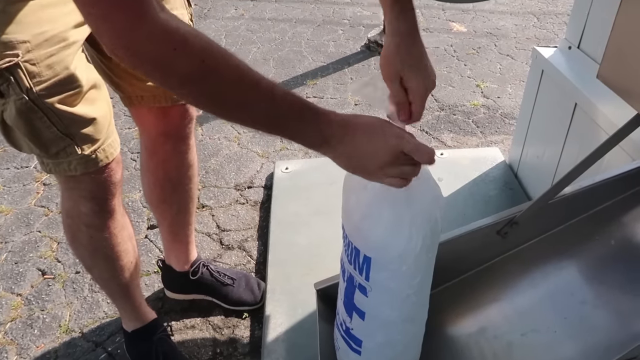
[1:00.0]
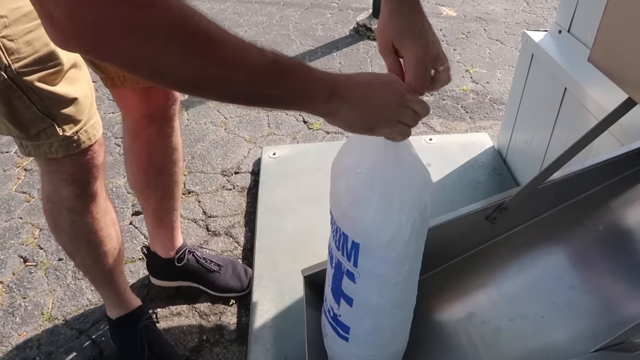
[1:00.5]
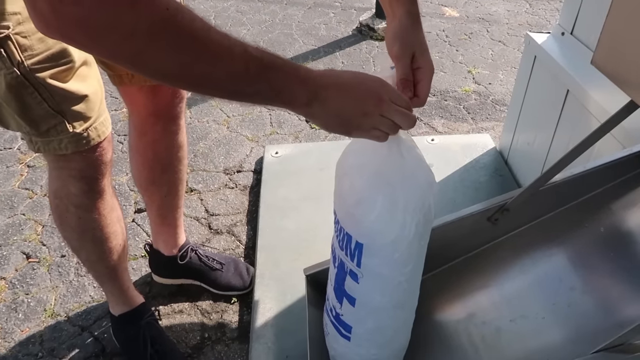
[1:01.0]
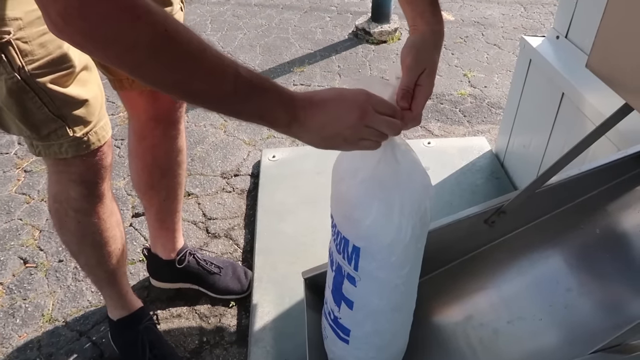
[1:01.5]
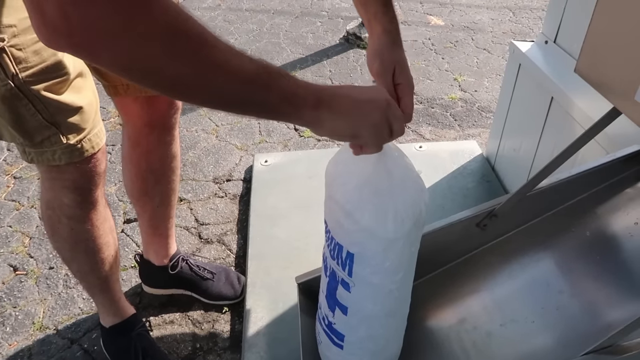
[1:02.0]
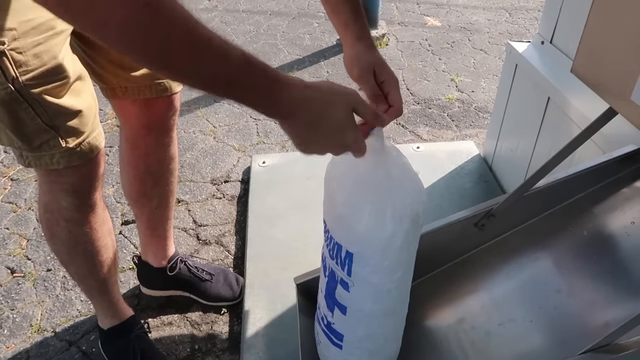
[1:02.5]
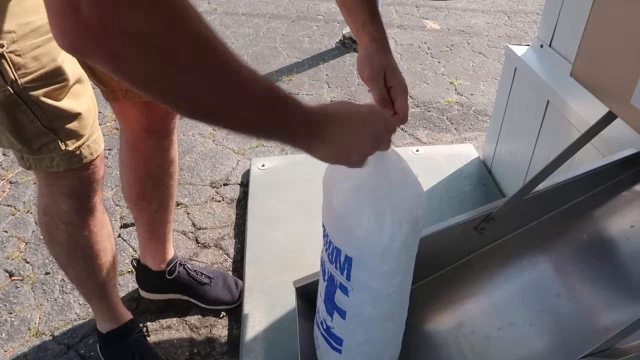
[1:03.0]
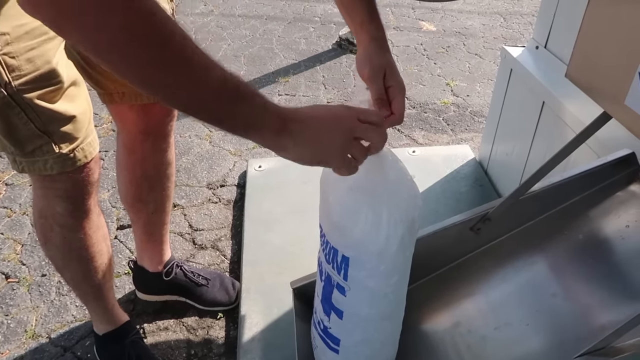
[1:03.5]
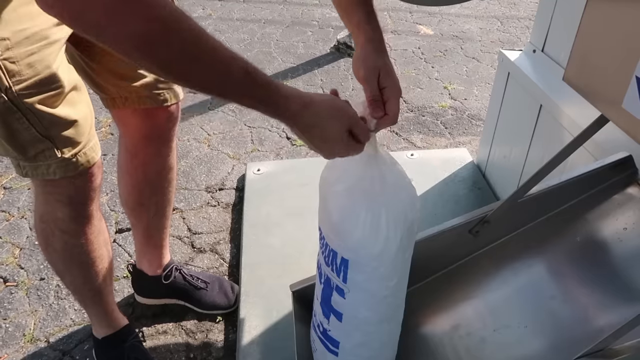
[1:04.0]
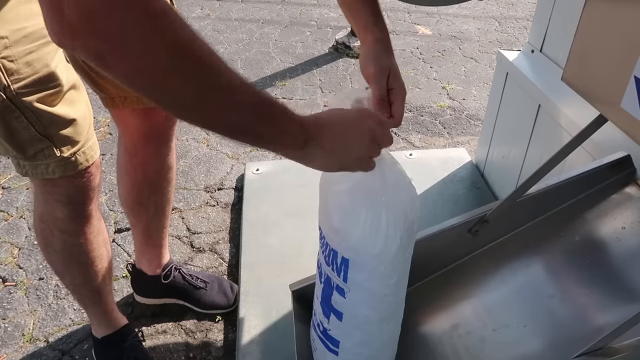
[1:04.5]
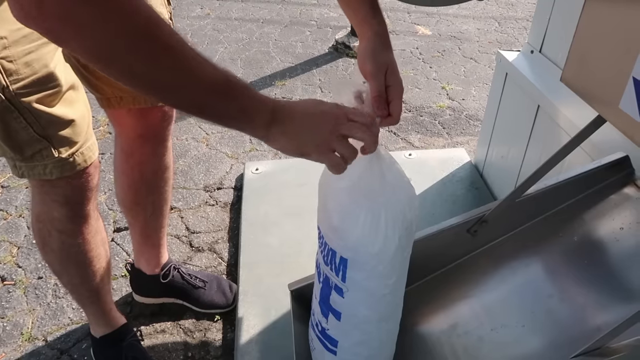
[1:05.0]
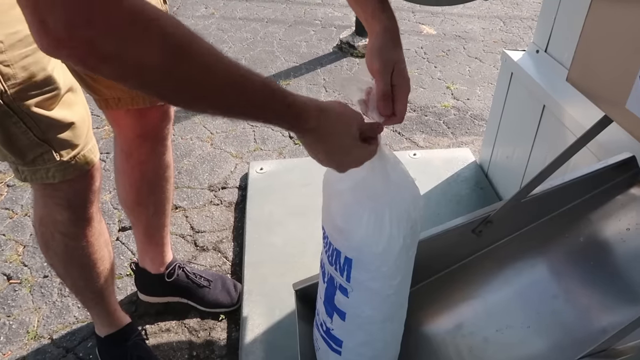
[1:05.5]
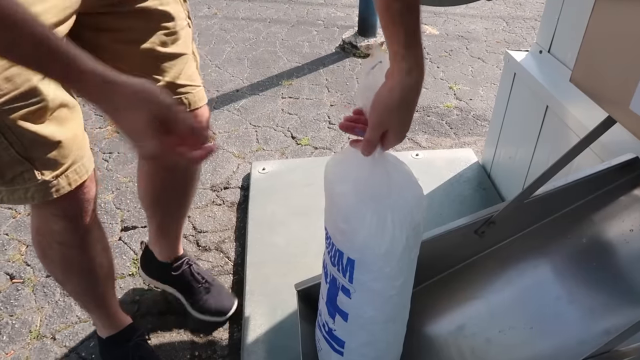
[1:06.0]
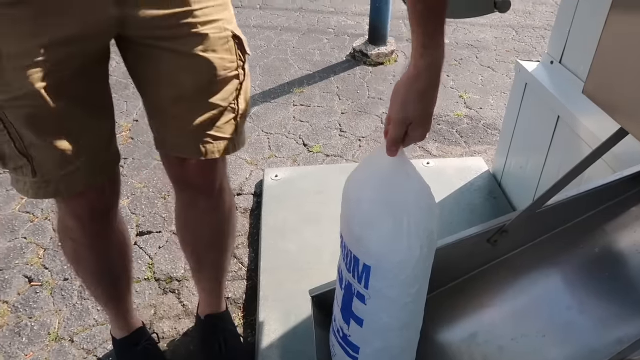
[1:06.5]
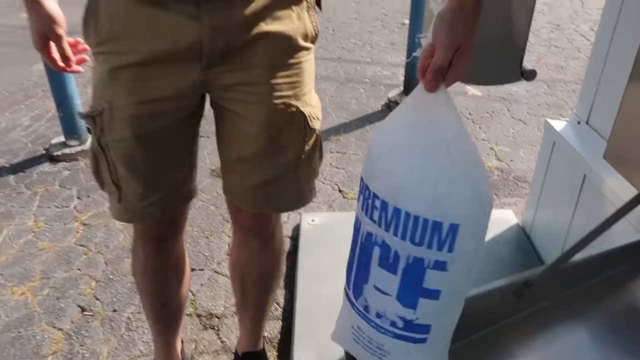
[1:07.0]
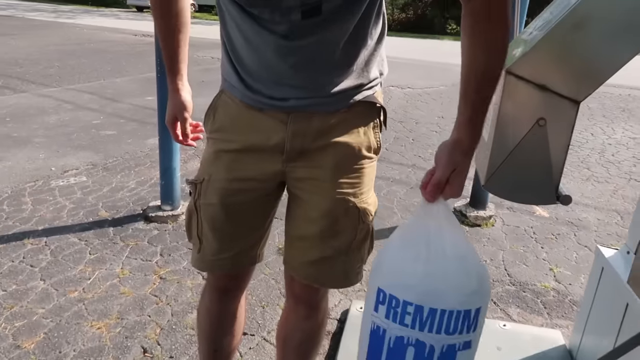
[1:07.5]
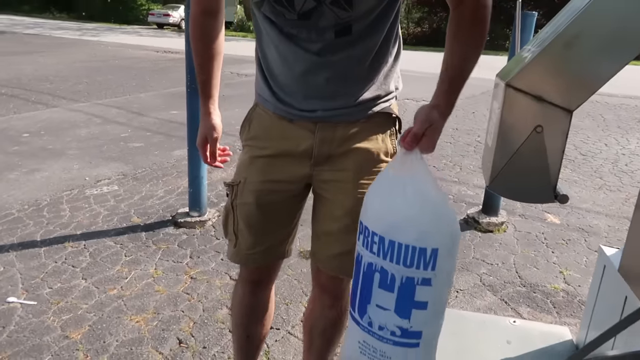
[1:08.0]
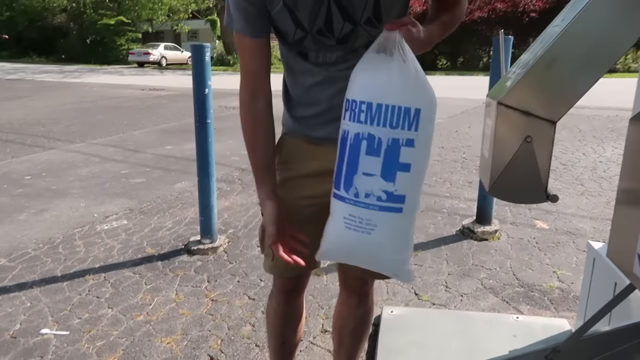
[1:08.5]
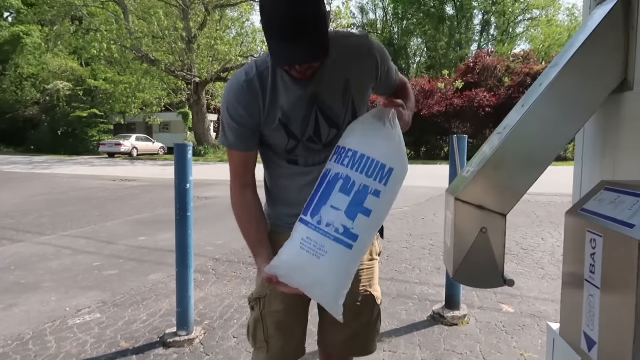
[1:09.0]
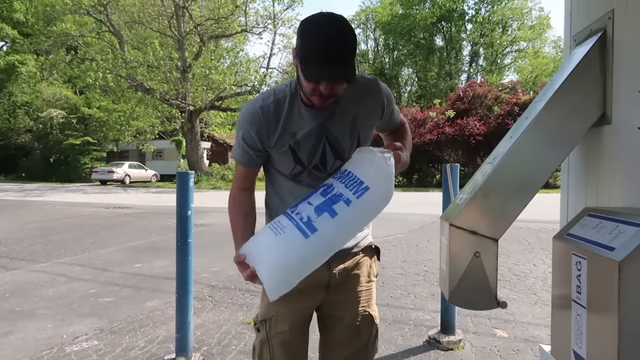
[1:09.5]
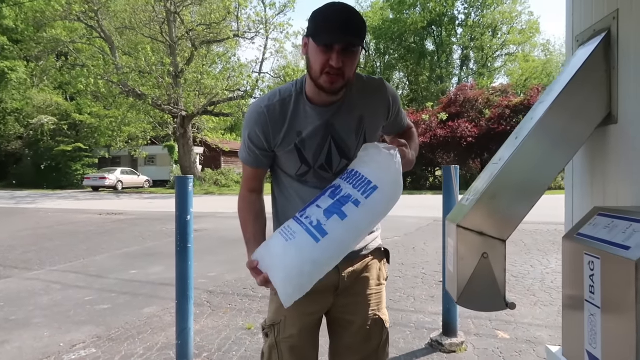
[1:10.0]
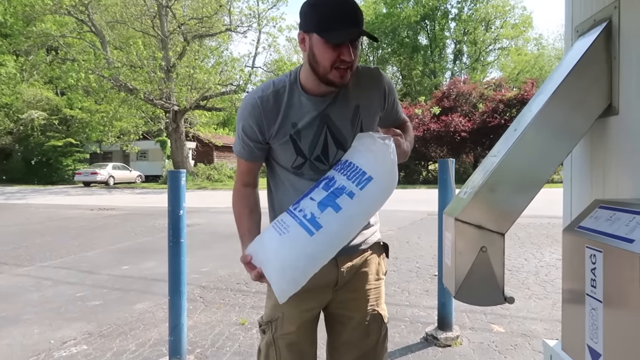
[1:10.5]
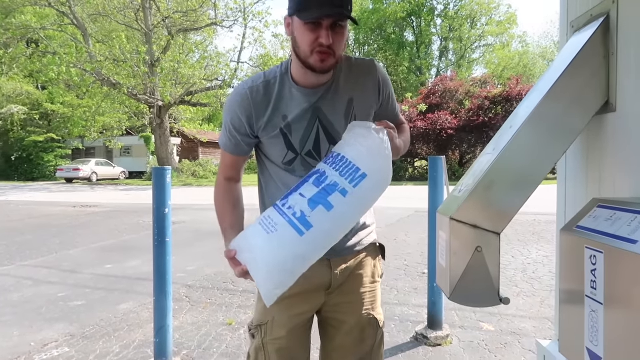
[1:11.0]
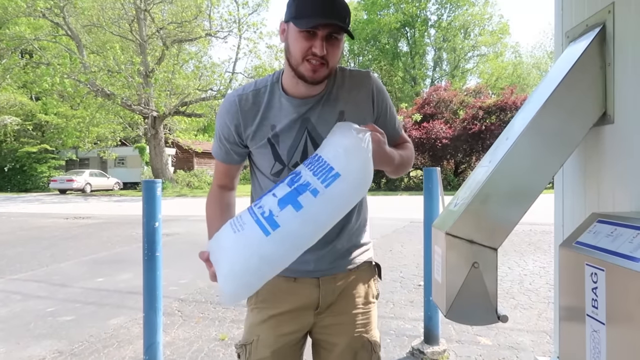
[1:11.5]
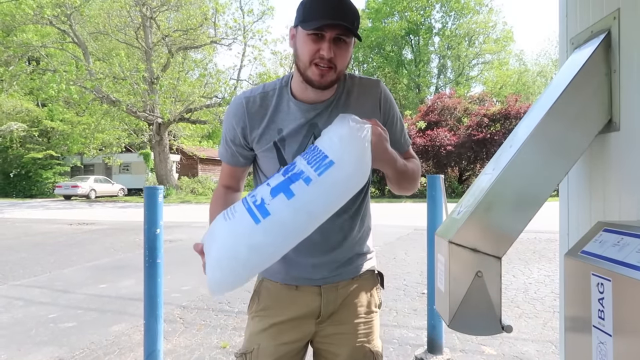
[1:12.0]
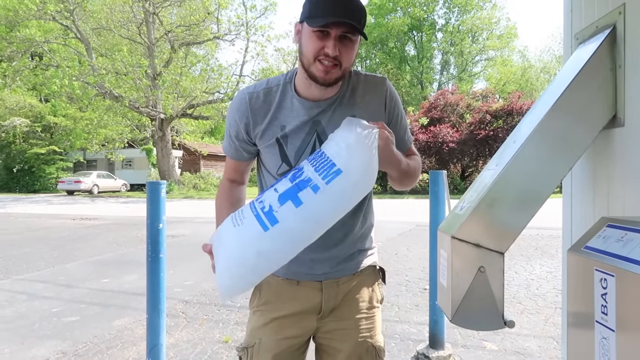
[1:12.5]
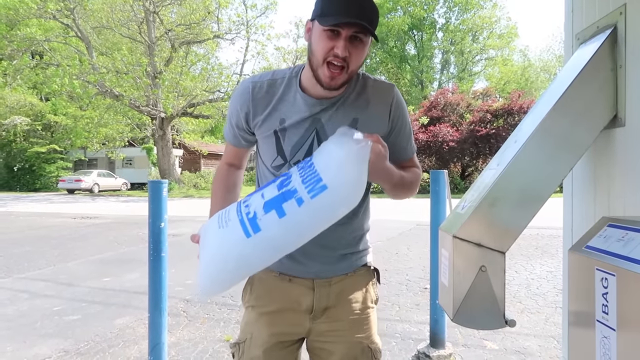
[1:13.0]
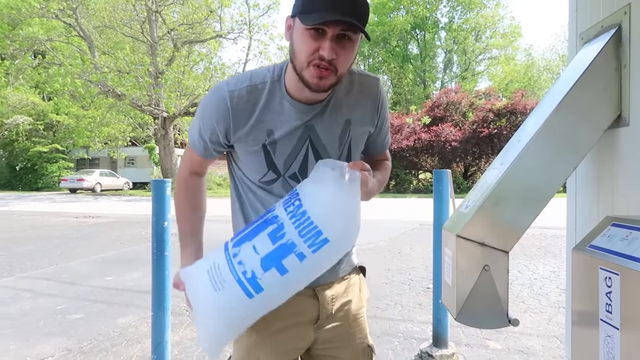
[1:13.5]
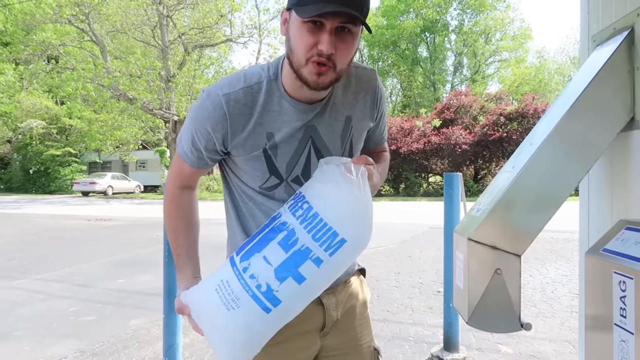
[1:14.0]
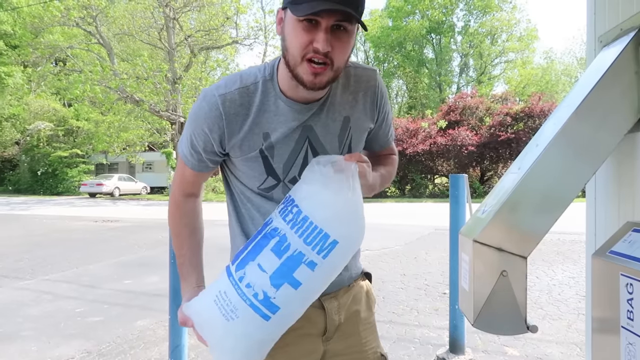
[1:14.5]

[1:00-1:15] Outside at the ice vending machine, a man ties up a bag of ice that was dispensed from the machine, using a blue tie. He wears tan shorts and black sneakers and has light skin. He then picks up the bag and shows it to the camera; the bag says "premium ice" on the front. The man's face becomes visible: he has a black cap on and a beard. He begins talking to the camera while holding the bag with two hands. The background is a residential street with a lot of trees. They have green leaves except for one tree, which is shorter than the others and has reddish leaves. A car and a house are in the background.